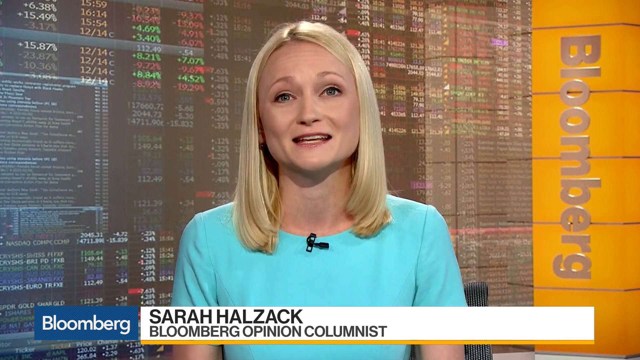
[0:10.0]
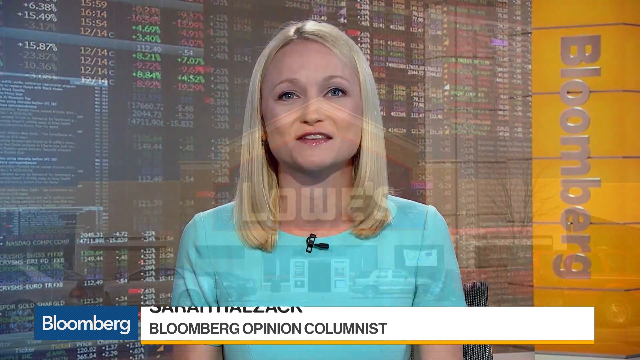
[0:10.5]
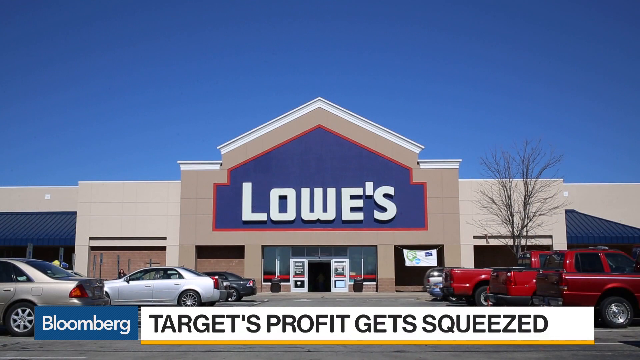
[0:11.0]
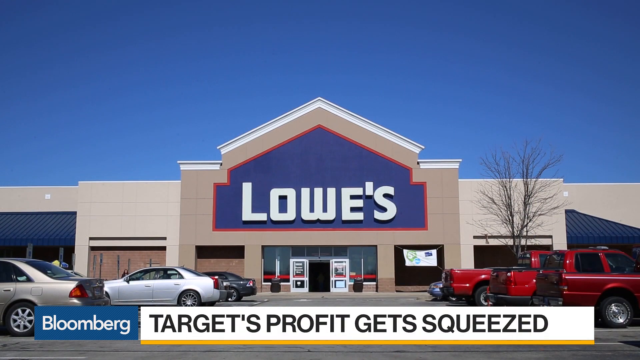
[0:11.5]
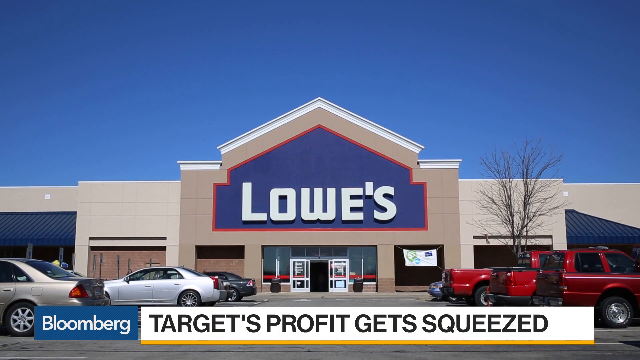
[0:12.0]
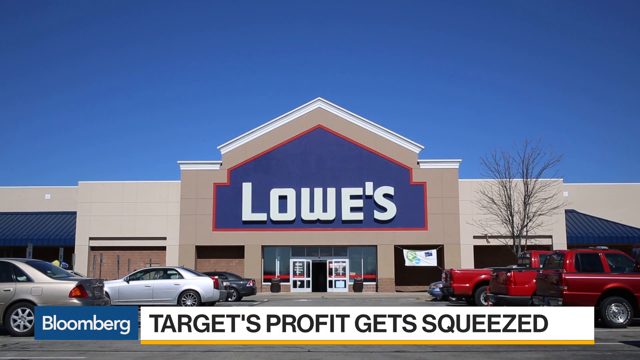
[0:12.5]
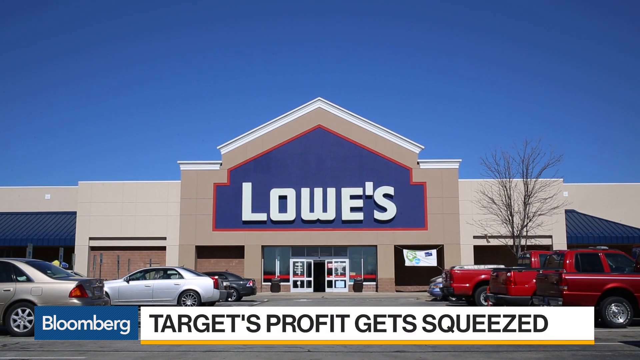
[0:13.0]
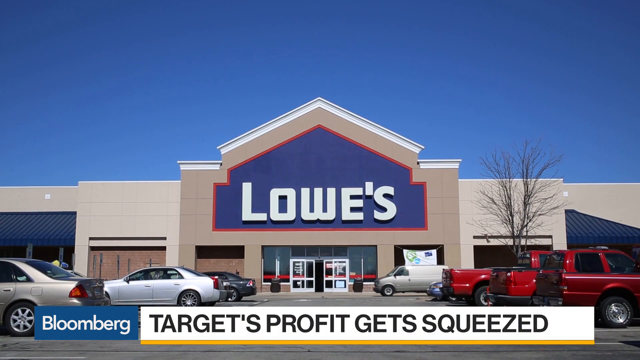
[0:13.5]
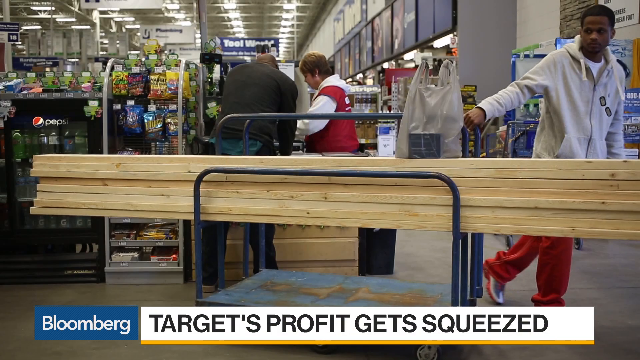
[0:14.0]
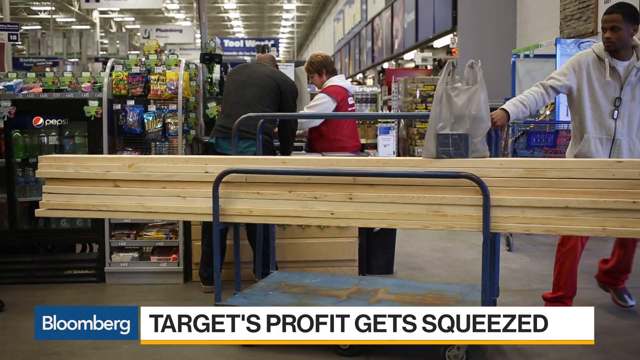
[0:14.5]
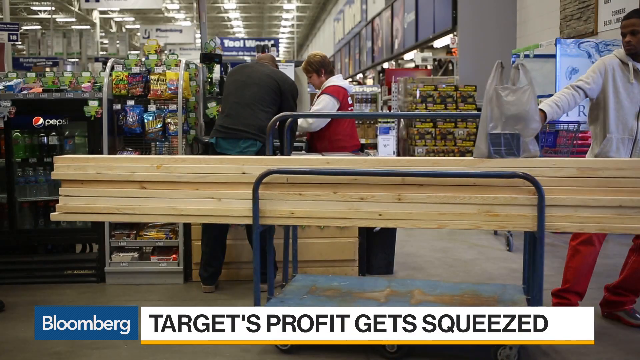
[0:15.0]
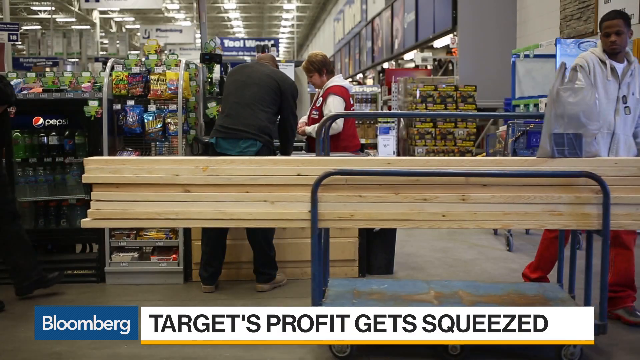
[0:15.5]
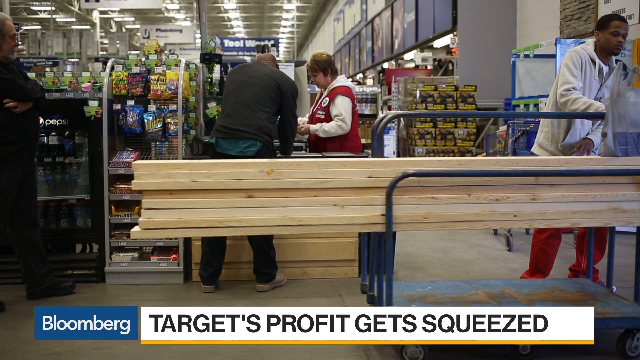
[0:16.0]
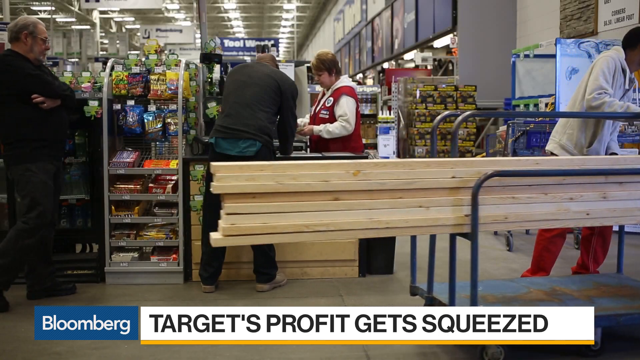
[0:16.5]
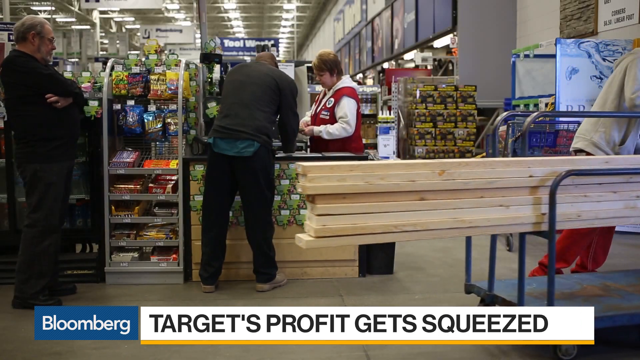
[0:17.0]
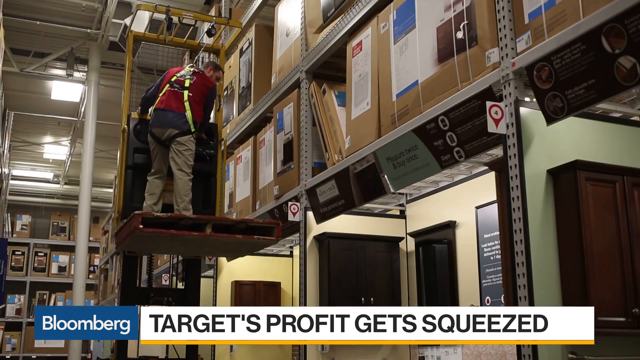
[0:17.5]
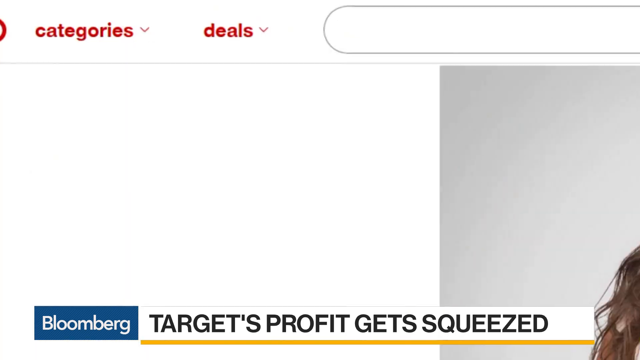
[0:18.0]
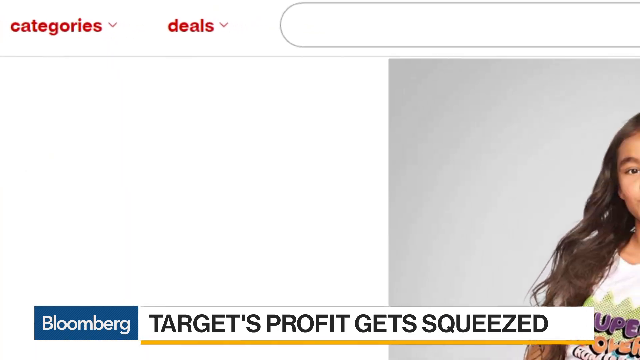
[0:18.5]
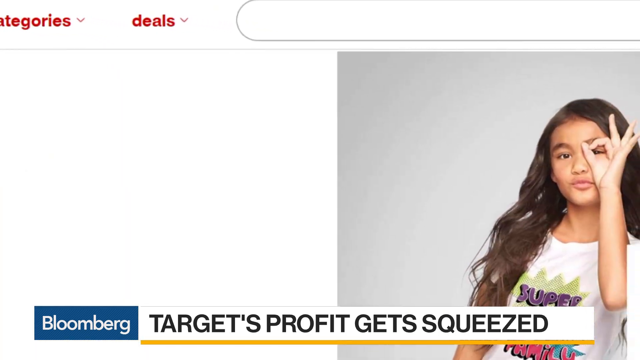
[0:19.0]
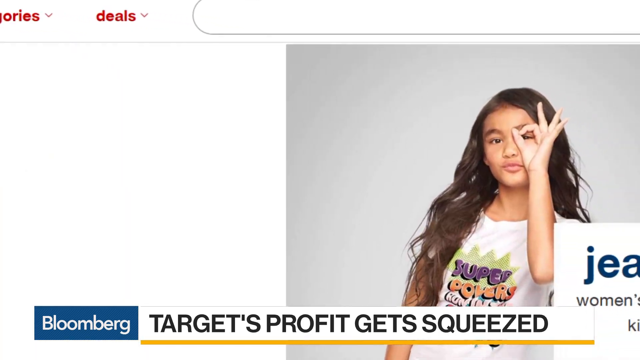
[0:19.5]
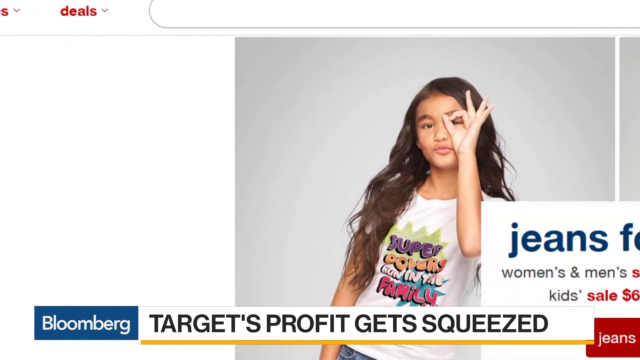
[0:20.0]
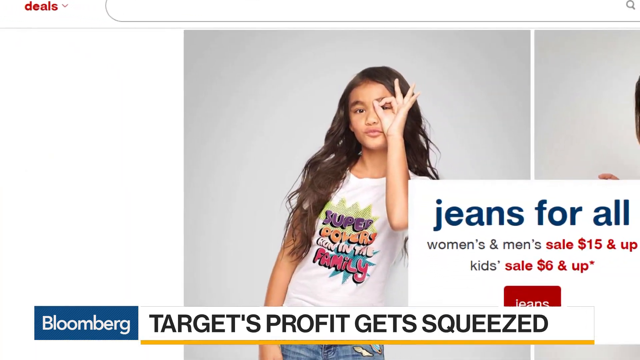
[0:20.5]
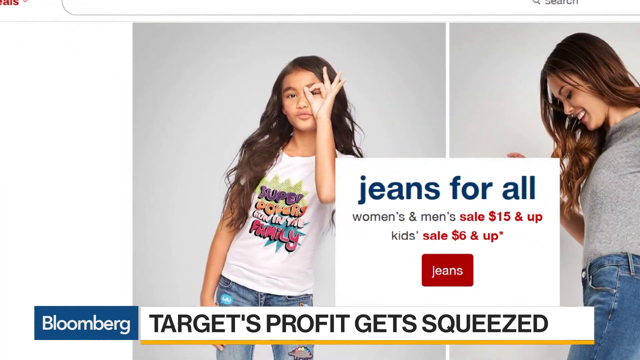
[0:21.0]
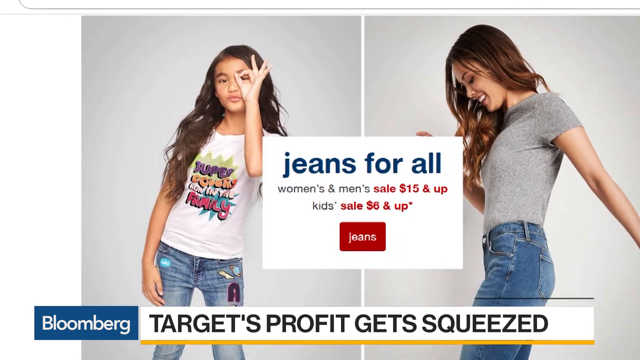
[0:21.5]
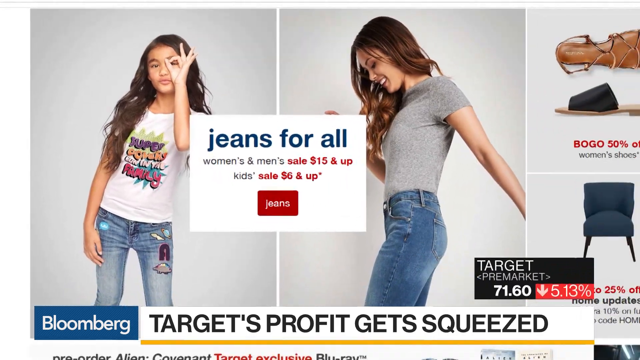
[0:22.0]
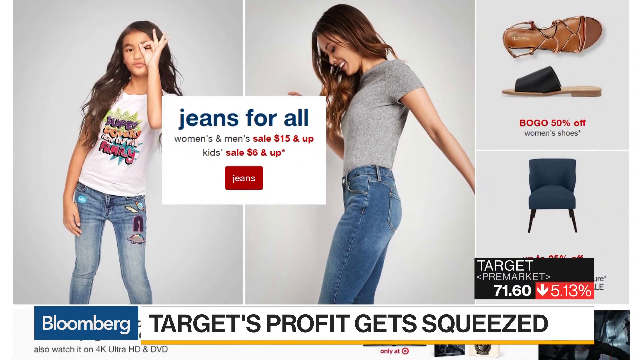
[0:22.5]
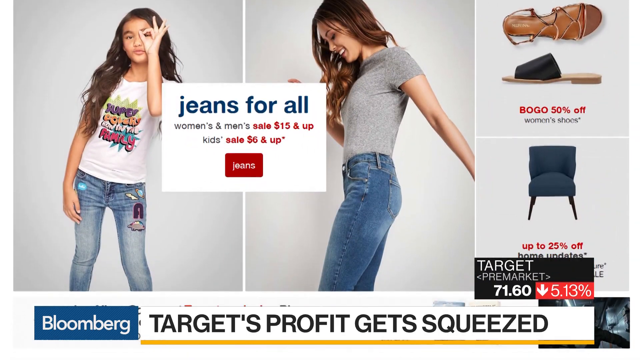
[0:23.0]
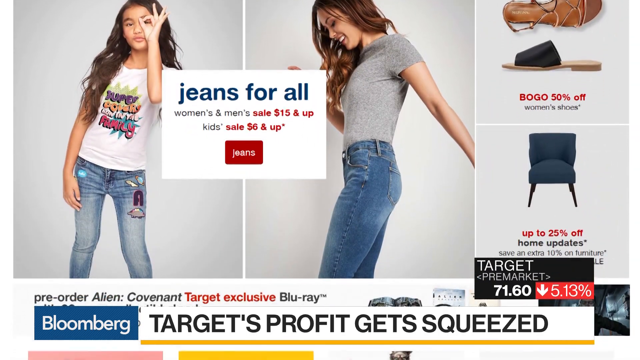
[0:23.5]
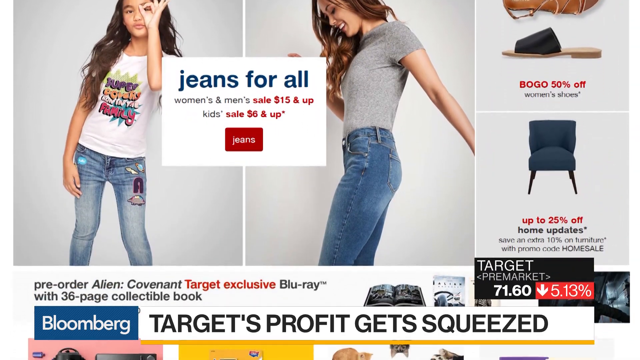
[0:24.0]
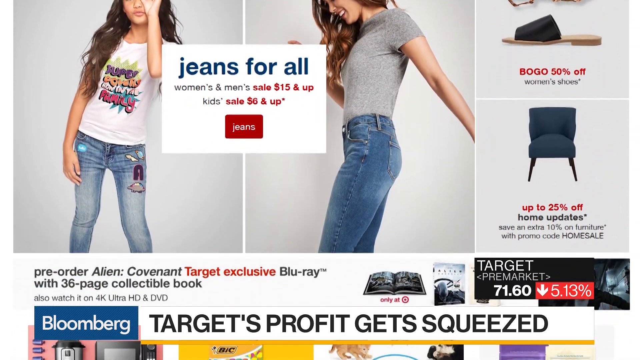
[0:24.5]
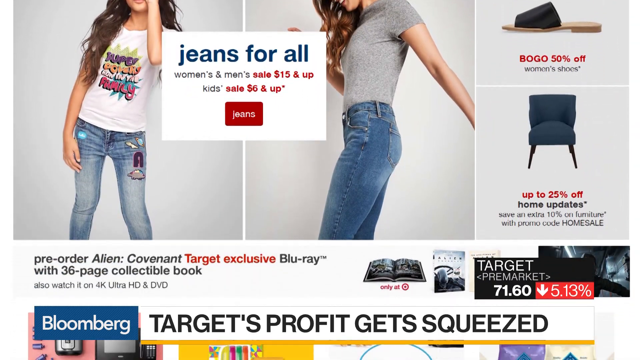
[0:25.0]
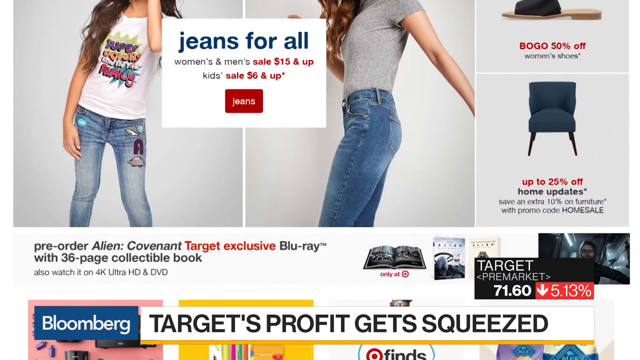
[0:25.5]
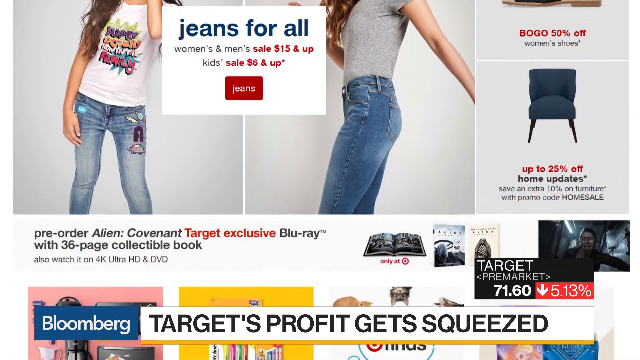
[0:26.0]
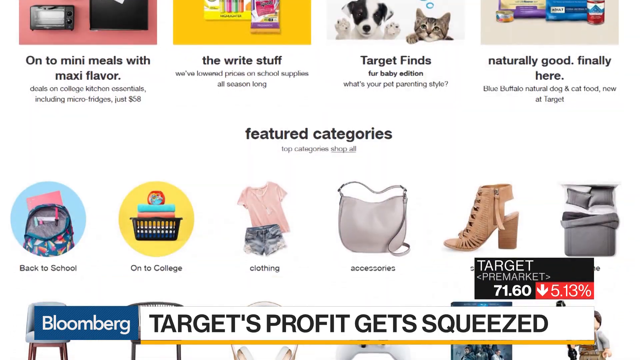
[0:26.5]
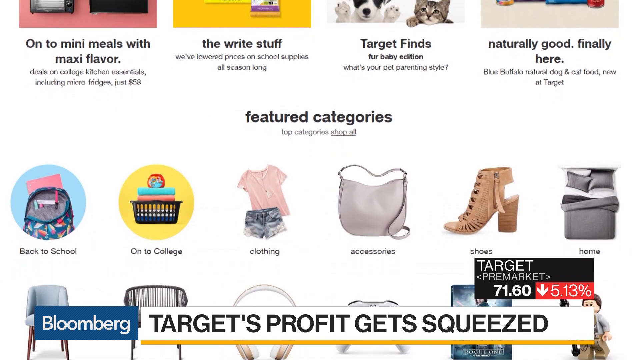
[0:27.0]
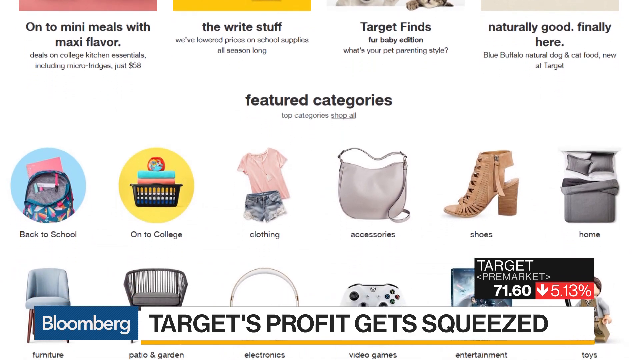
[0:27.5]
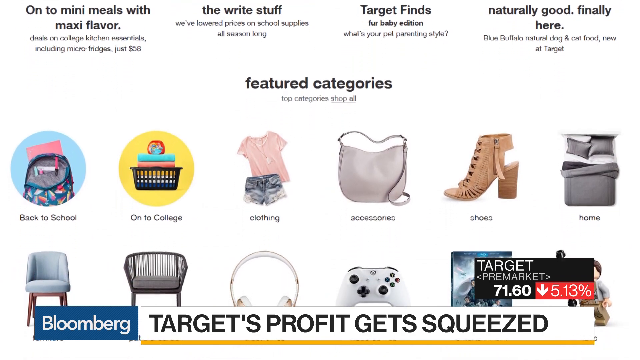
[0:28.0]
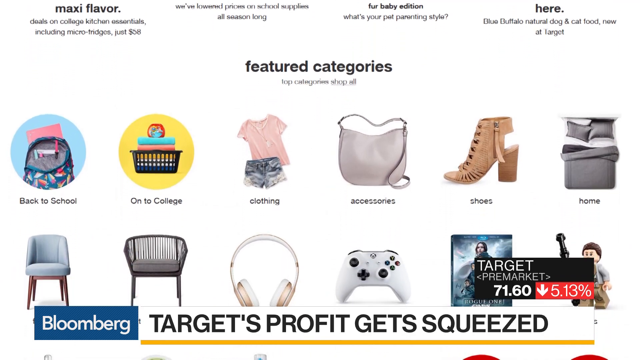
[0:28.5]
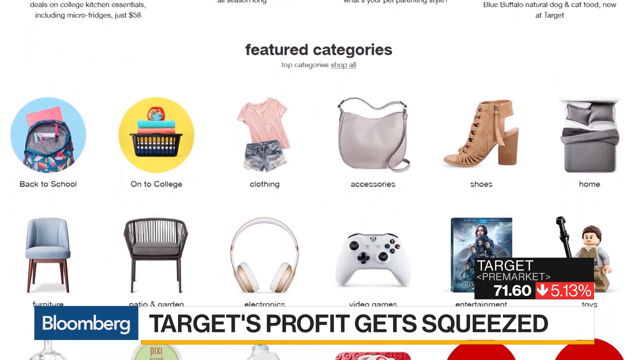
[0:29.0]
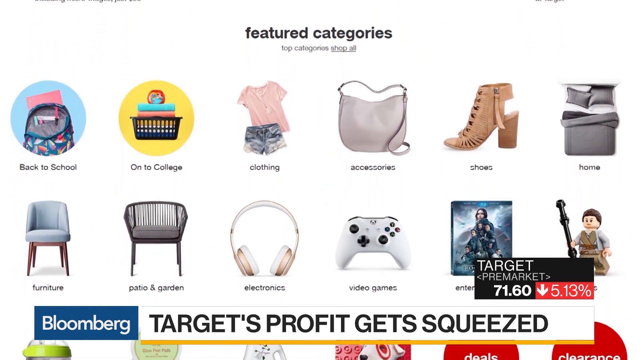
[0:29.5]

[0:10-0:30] The camera stays focused on Sarah Halczak, a reporter for the Bloomberg Report, who has blonde shoulder-length hair and wears a light blue dress with a black microphone pinned to the front. She is speaking. The screen then changes to a picture of a Lowe's store with the text "targets profits get squeezed." The Lowe's emblem shows the white Lowe's letters on dark blue. Inside the store, people are shopping, buying lumber and products that need a lift to move them. Next comes a Target ad with two young girls modeling jeans, with the text "jeans for all women's sale $15 and up." What is apparently Target's newspaper ad shows the sales going on, with shoes listed and a chair listed. More featured items appear as the camera scrolls up.